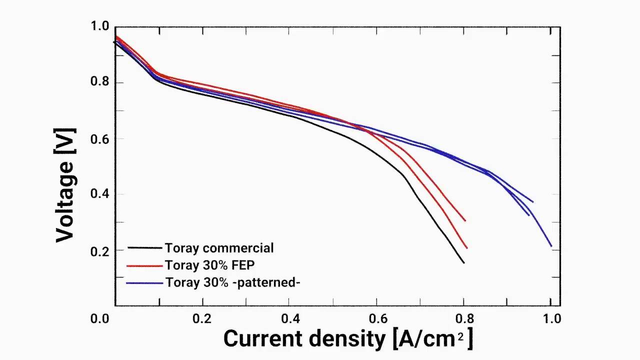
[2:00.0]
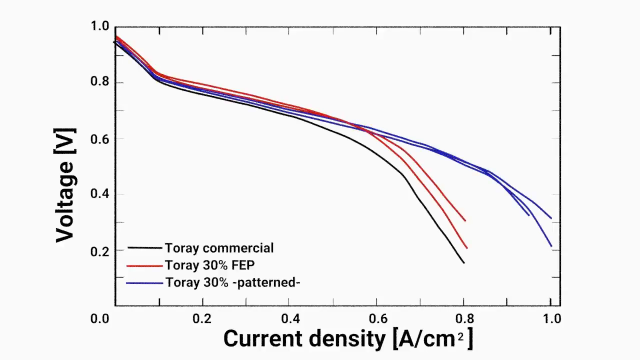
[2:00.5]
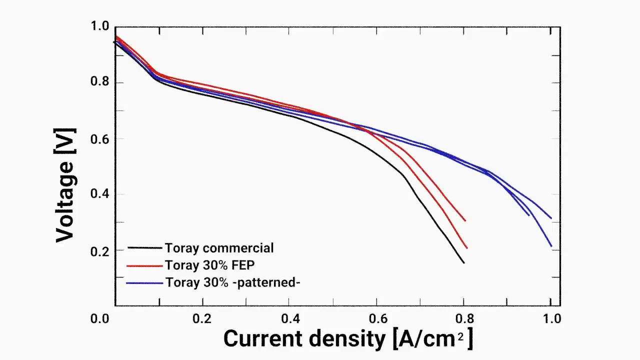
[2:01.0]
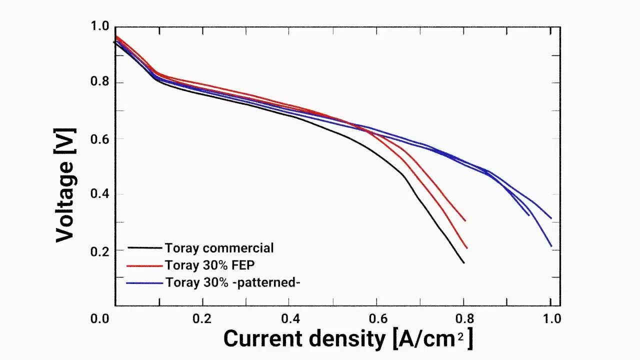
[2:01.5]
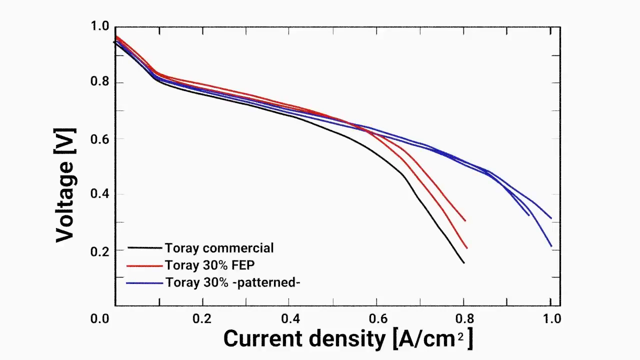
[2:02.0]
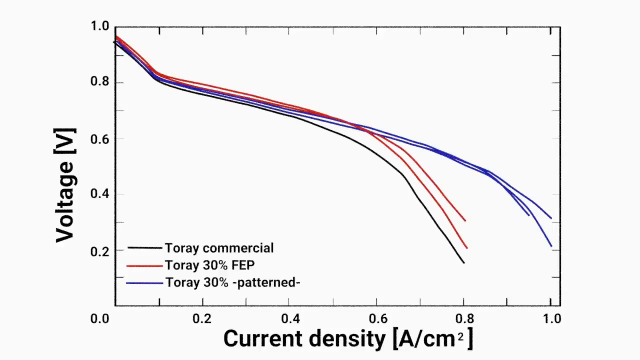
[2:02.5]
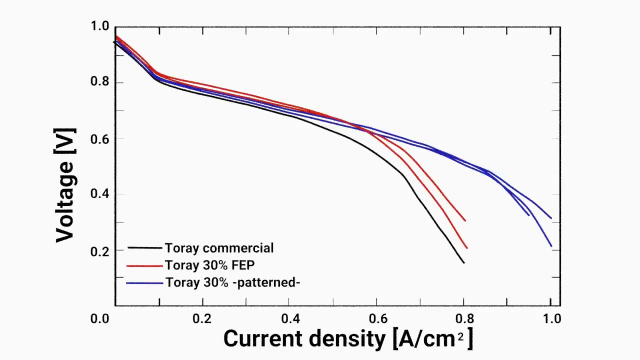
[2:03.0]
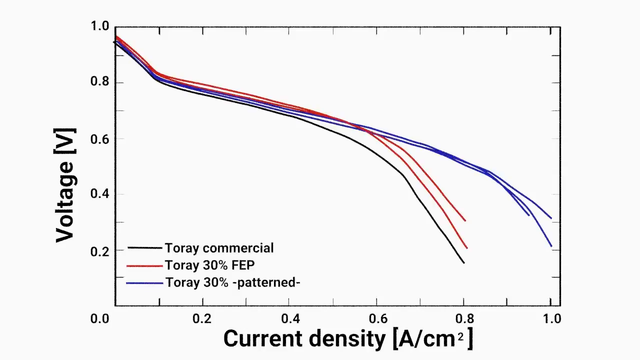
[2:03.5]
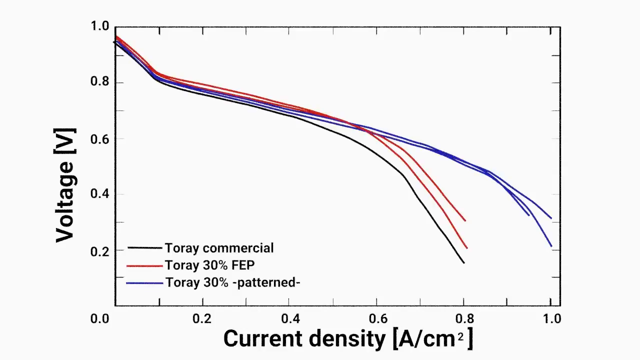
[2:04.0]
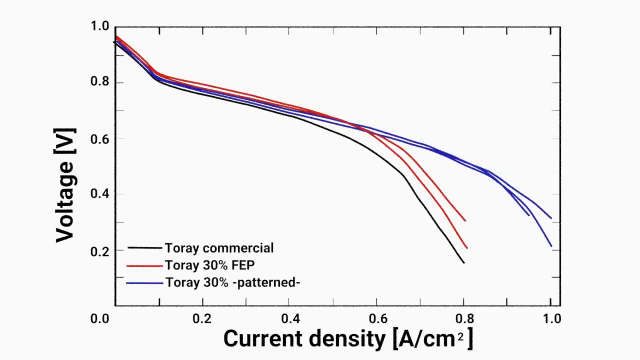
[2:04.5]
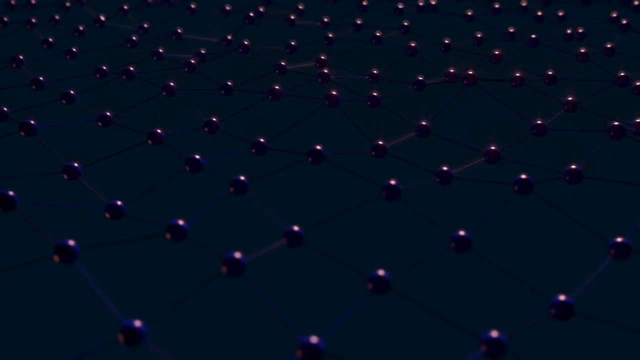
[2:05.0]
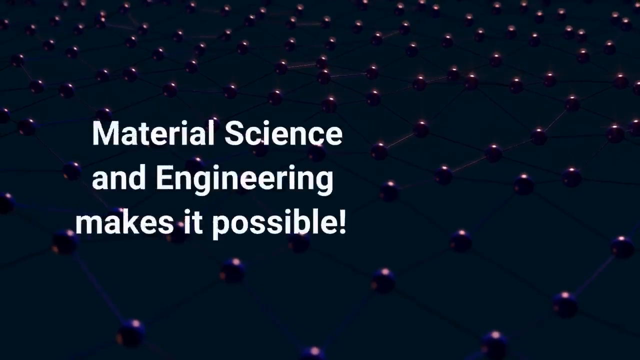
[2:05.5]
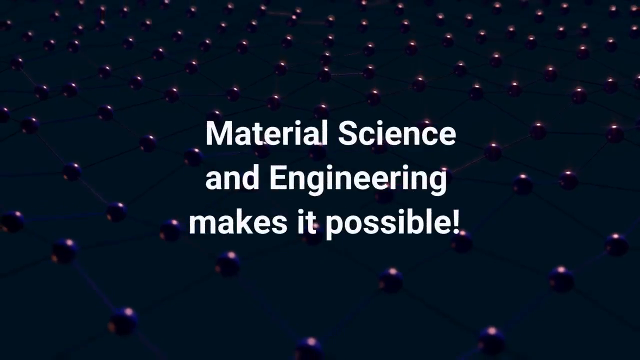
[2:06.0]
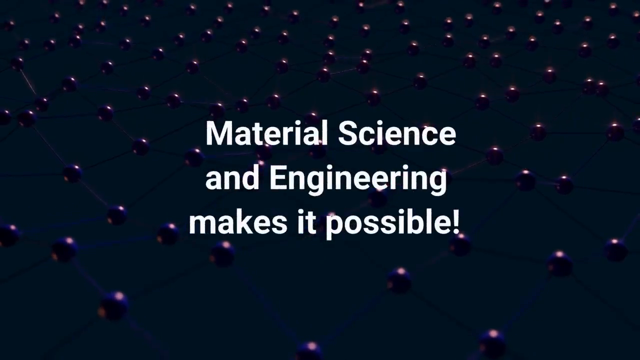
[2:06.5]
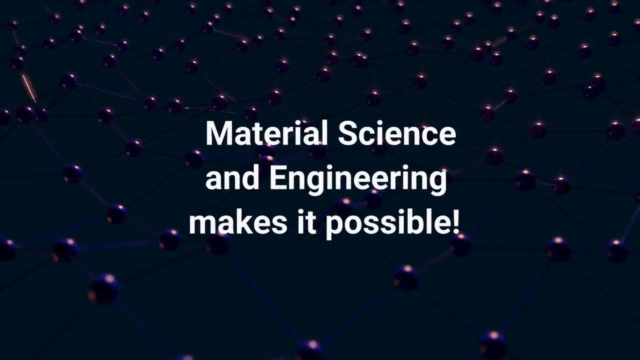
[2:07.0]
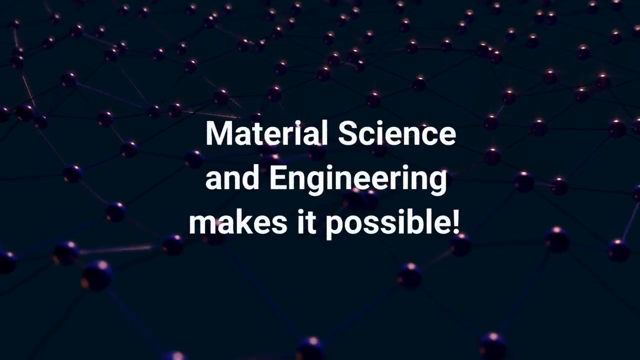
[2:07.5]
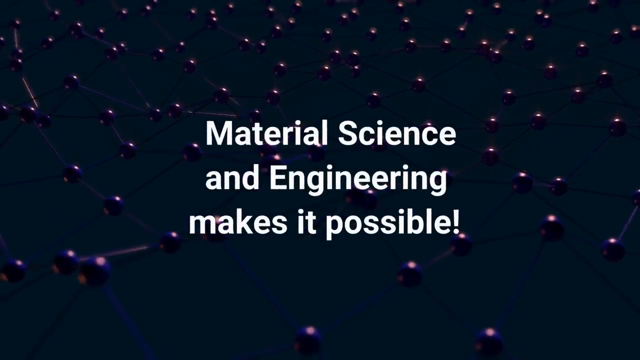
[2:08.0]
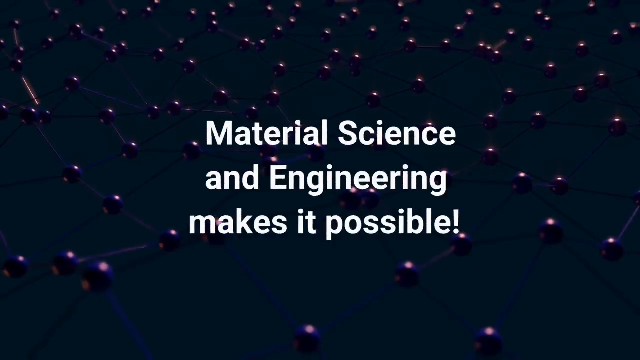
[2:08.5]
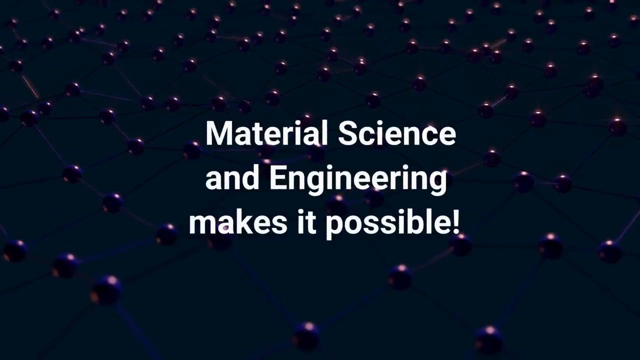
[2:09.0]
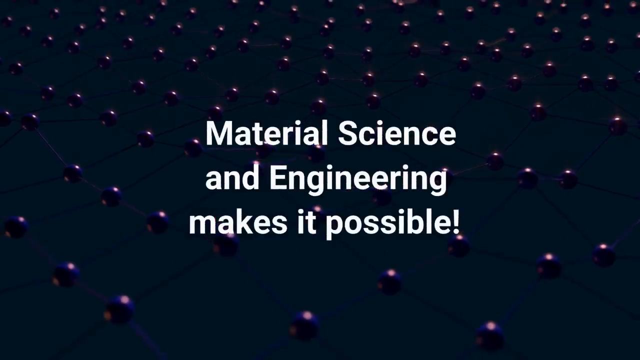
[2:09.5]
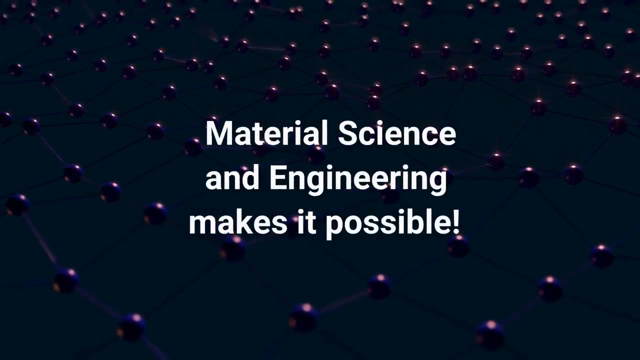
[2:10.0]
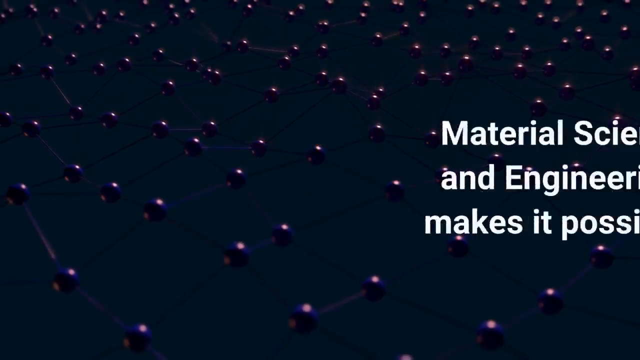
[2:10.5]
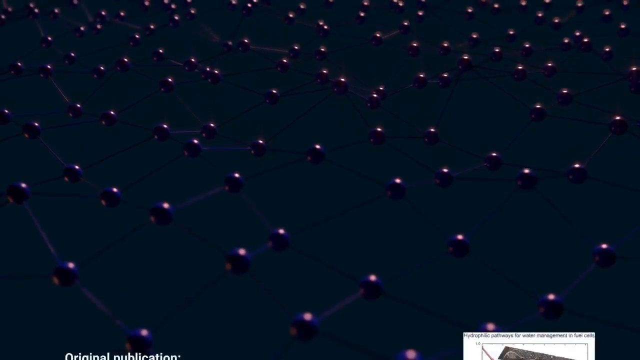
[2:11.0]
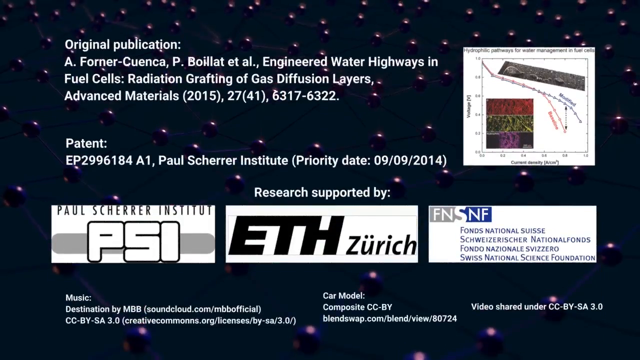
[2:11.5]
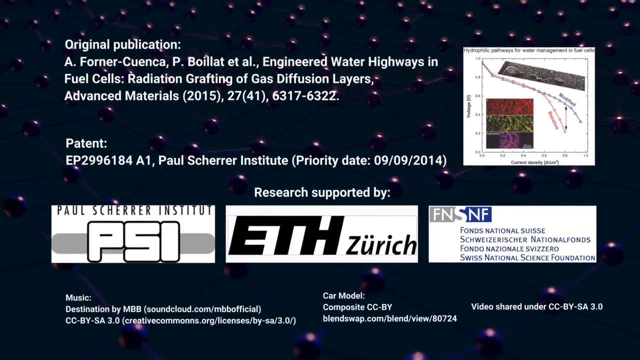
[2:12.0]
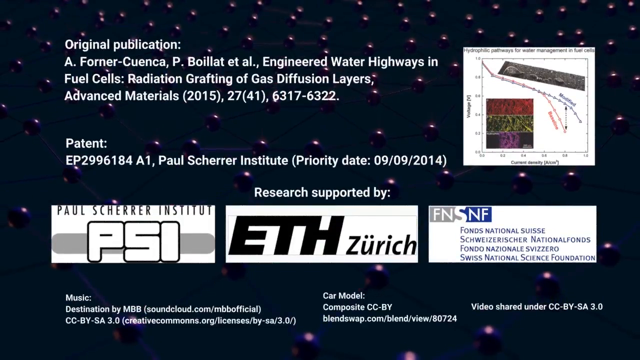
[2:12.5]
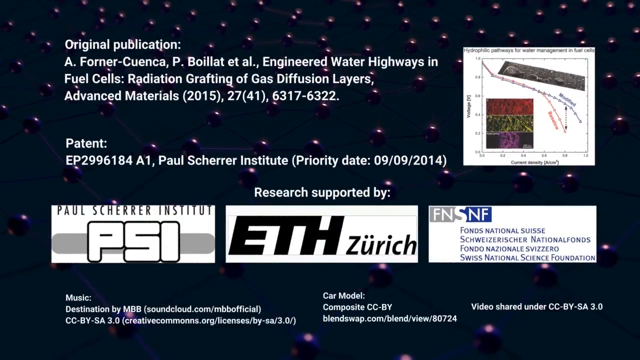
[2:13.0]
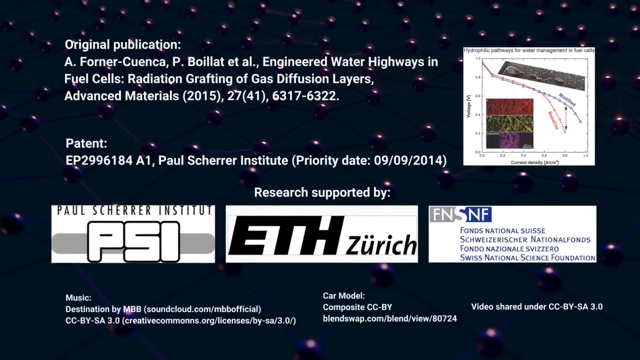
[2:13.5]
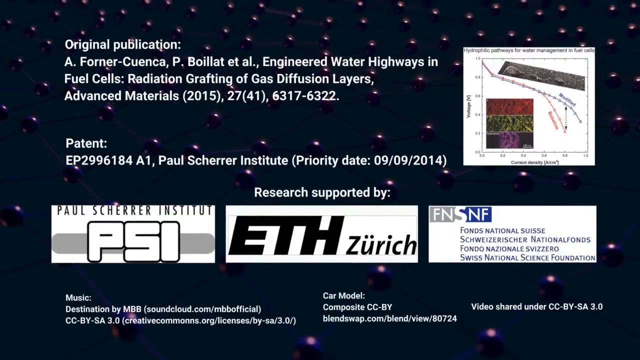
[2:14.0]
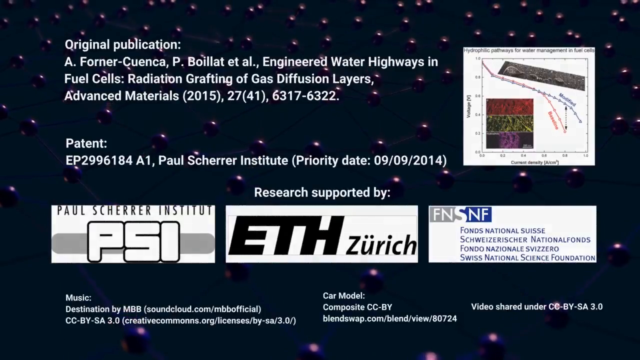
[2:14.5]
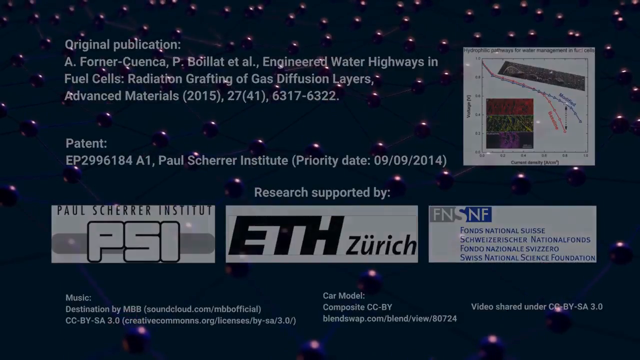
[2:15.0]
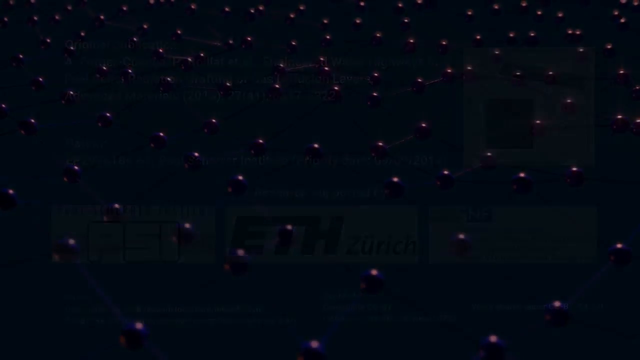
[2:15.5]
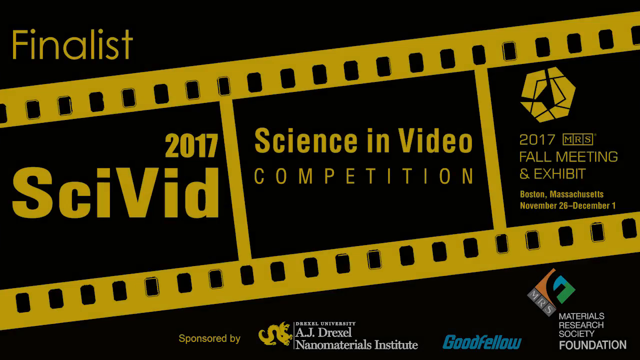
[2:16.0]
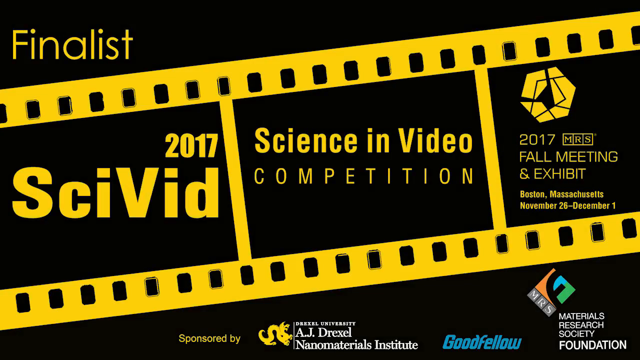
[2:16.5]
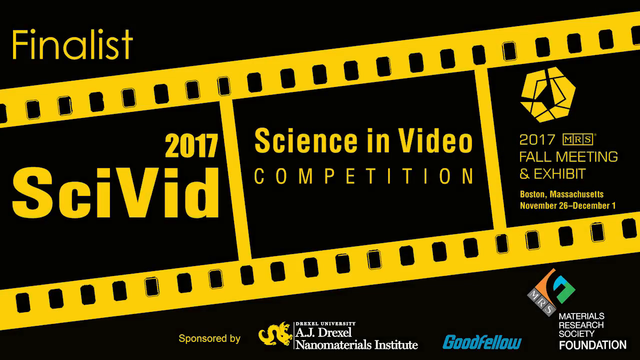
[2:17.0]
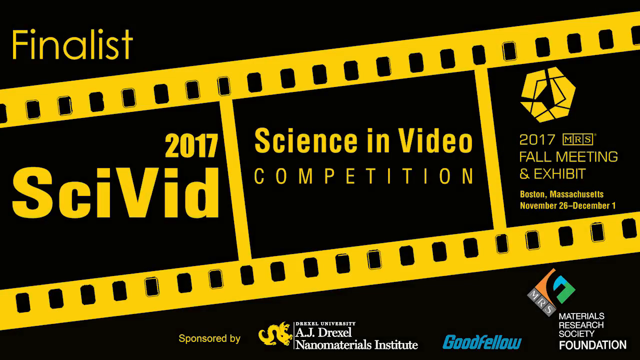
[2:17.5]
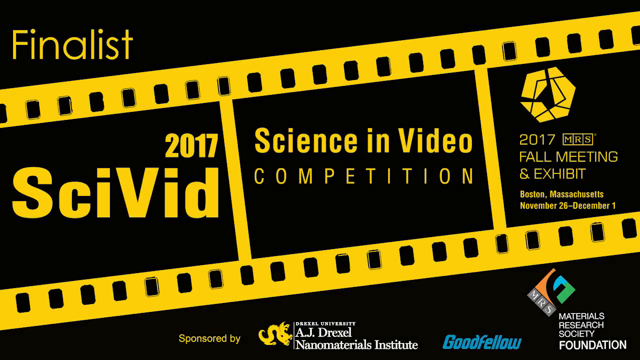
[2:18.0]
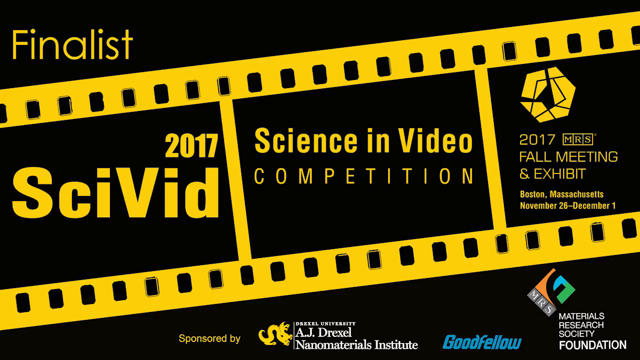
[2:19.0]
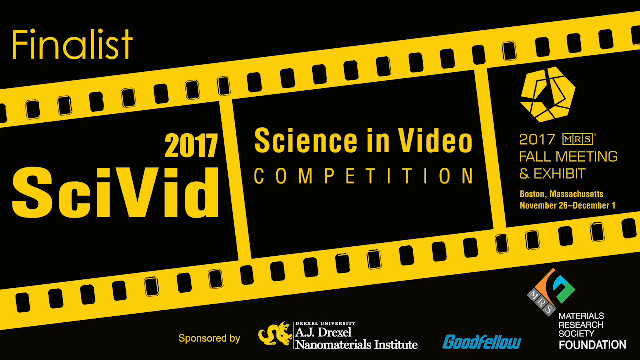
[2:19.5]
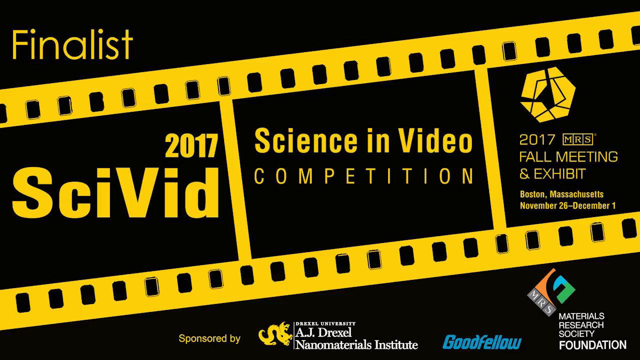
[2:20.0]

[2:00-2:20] The graph on the left, with its vertical axis labeled voltage and horizontal axis labeled current density, shows blue and red lines curving from the upper left toward the bottom right at different rates; they all stop a little short of the corner. The graph goes away and is replaced by a blue field with many blue spheres that look metallic, apparently CG with lighting from the top, giving a highlight at the top right of each sphere. The spheres are connected by thin blue threads and bounce up and down. A white caption rolls in from the left across the middle reading "material science and engineering make it possible," stays for a few seconds, then scrolls off the right side. Credits then roll quickly from the bottom to the top in white text, reading "original publication" and listing A. Forner-Koenka, P. Boyot, et al., "Engineered water highways," fuel cells, radiation grafting of gas diffusion layers, Advanced materials, 2015, 27 (41), 6317-6322. To the right is a small white-background picture of the graph from earlier, too small to read, with a picture of the fibrous material above the curved line and, below it, the three red, green and purple striped pictures indicating different materials, possibly carbon, chlorine and the composites, not labeled this time. On the left, the credits continue with patent EP2996184 A1, Paul Scherr Institute, priority date 9-9-2014, then "research supported by" with logos for the Paul Scherr Institute, ETH Zurich, and FNS NF, Fonds National Suisse. A music credit reads "destination by MBB," SoundCloud, MBB official, with a Creative Commons license. The car model is credited as composite seat, Creative Commons, blendswap.com/blend/view/80724, and the video is shared under a Creative Commons 3.0 license. This stays briefly, then fades to a black background with a yellow logo that looks like a film strip. Above it is the word "finalist"; the left frame reads "2017 SciBed," the middle frame reads "science and video competition," and the right frame has a logo reading "2017 Fall Meeting and Exhibit" with text about Boston, Massachusetts.